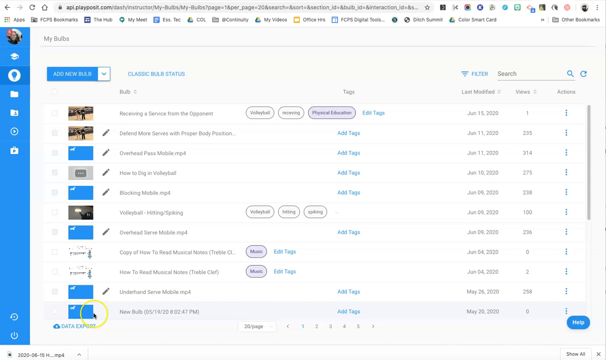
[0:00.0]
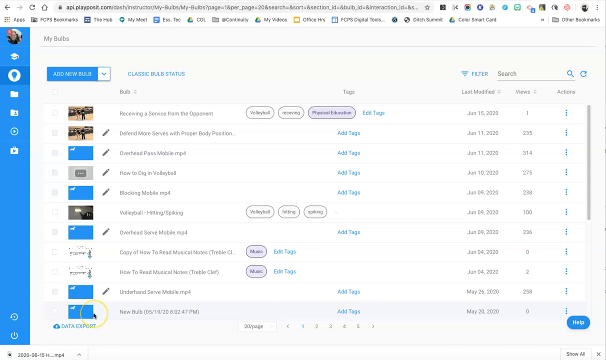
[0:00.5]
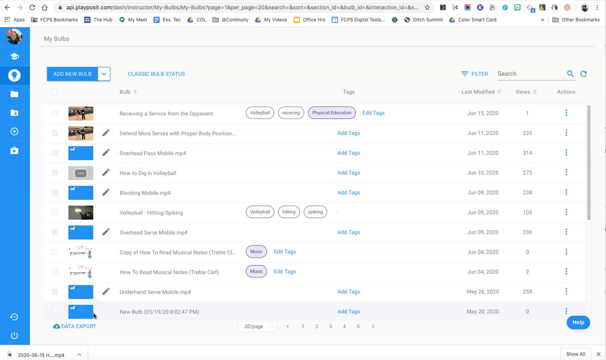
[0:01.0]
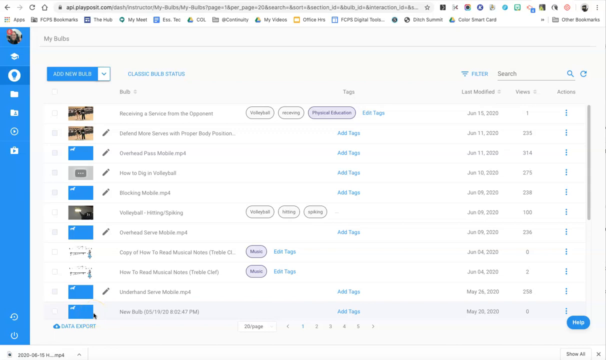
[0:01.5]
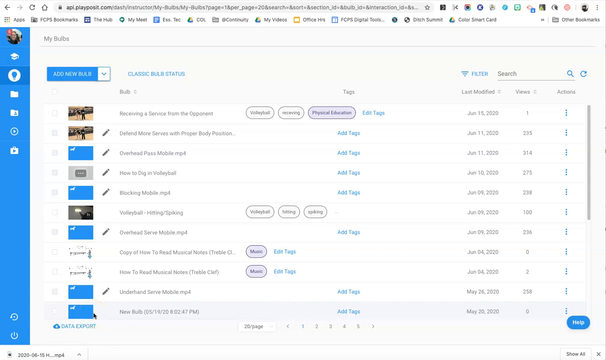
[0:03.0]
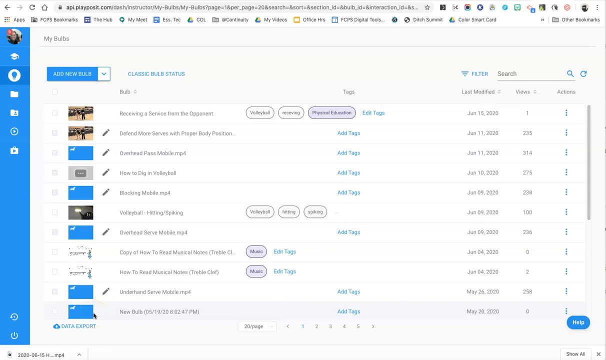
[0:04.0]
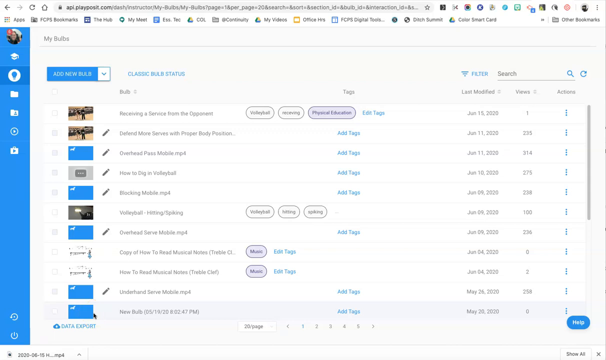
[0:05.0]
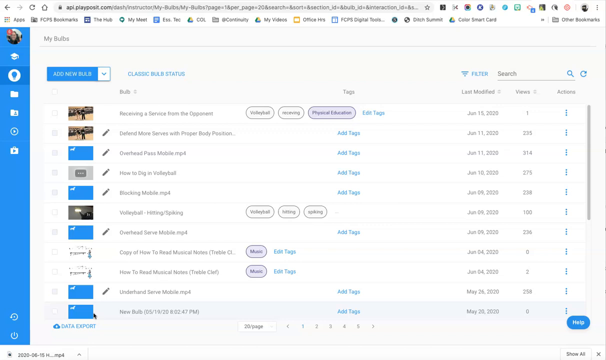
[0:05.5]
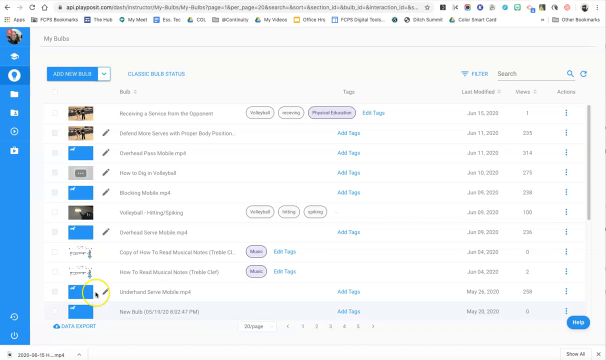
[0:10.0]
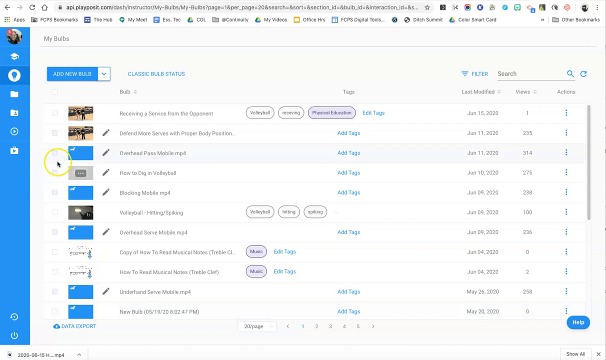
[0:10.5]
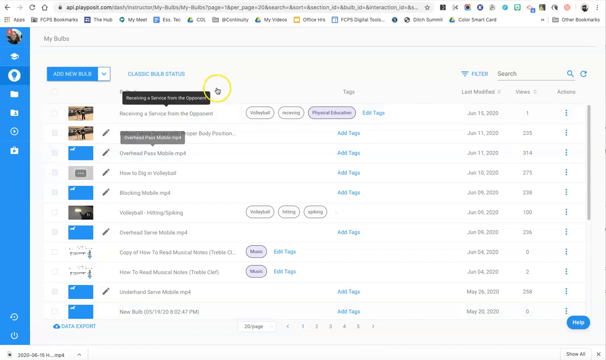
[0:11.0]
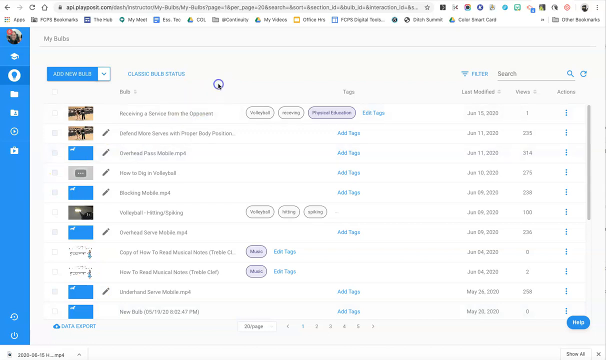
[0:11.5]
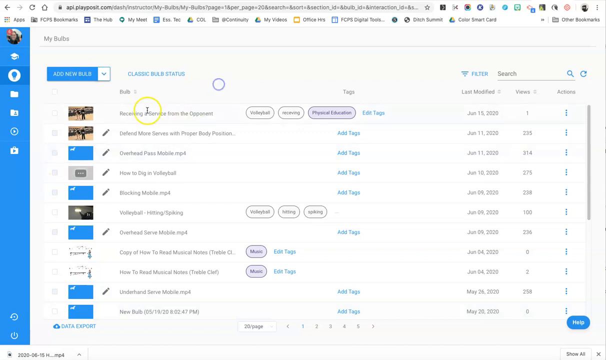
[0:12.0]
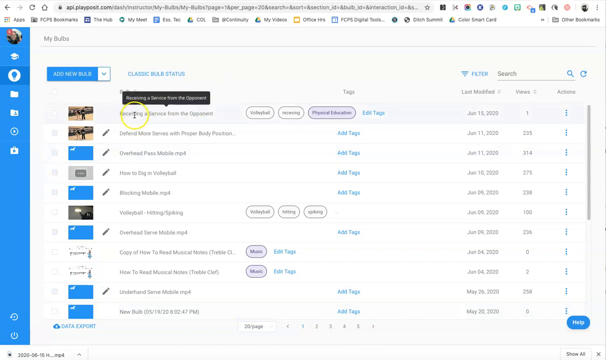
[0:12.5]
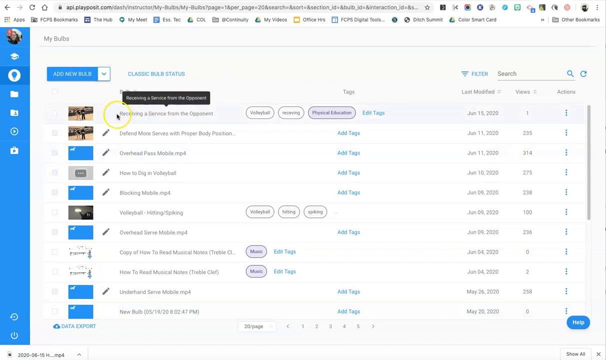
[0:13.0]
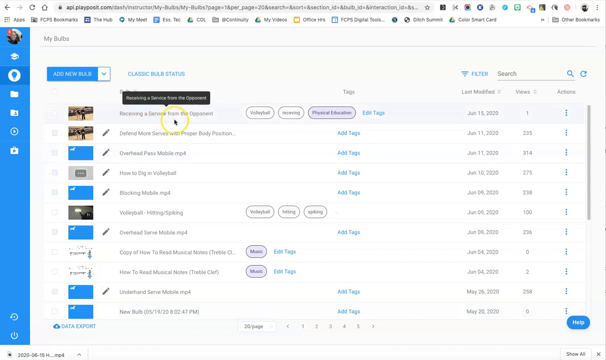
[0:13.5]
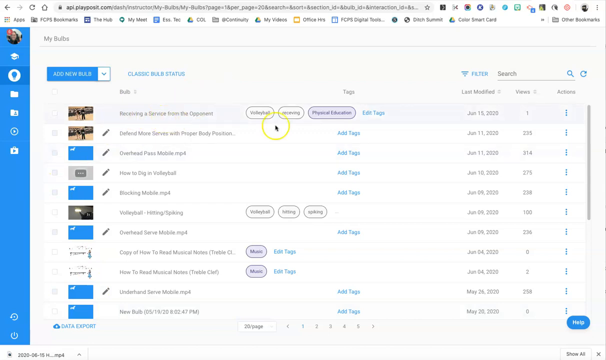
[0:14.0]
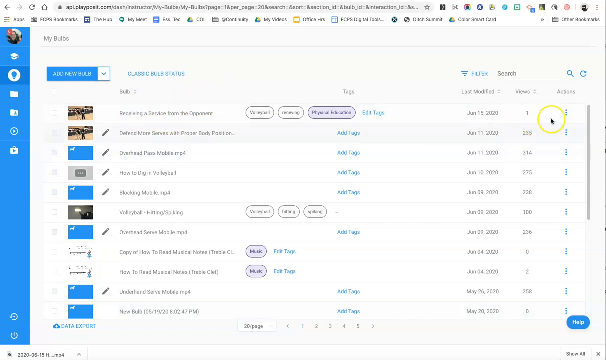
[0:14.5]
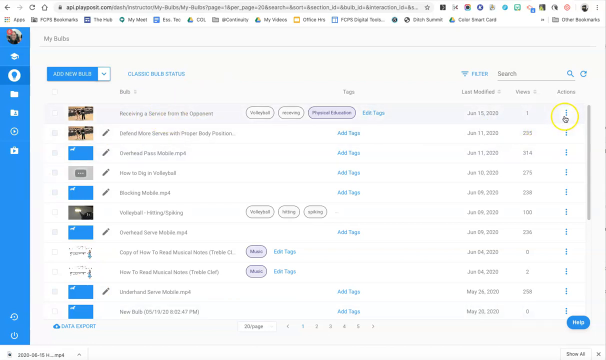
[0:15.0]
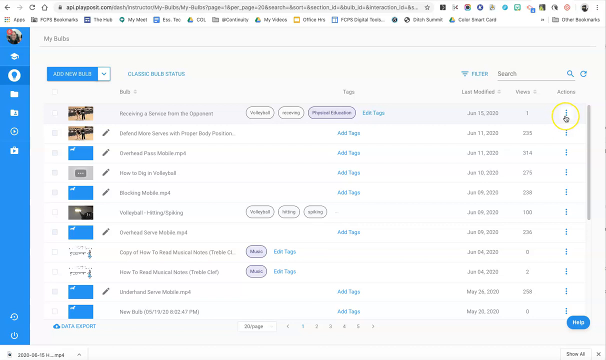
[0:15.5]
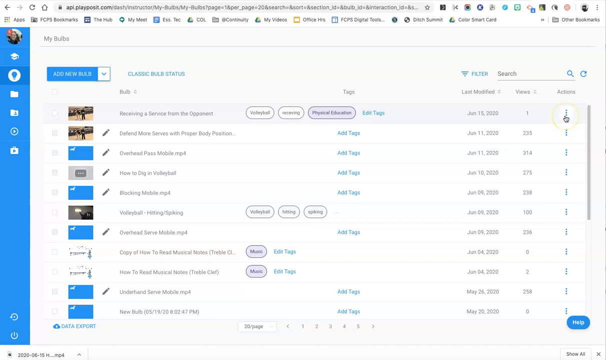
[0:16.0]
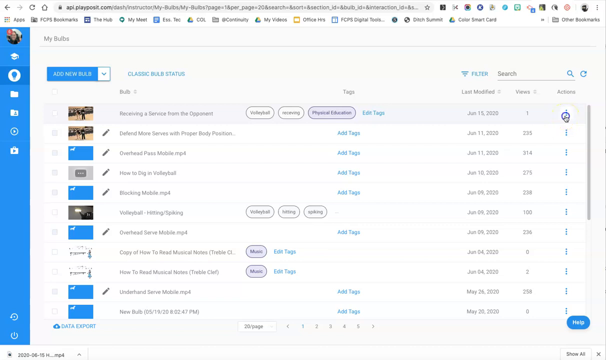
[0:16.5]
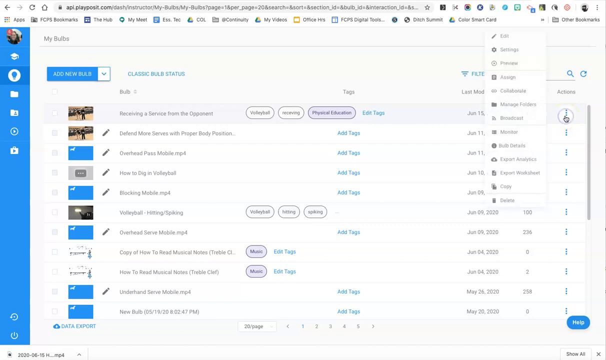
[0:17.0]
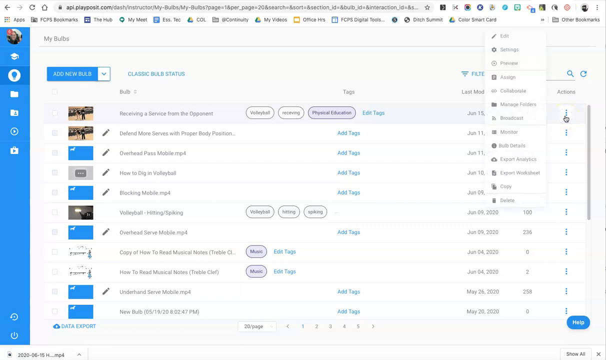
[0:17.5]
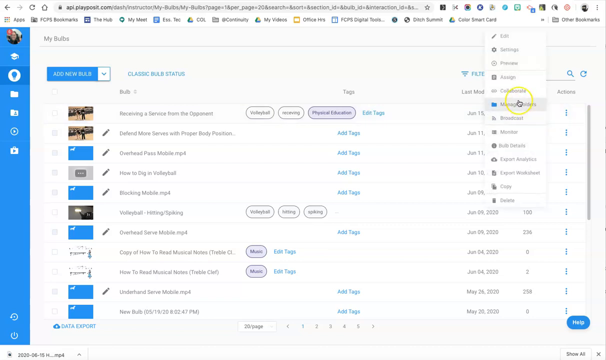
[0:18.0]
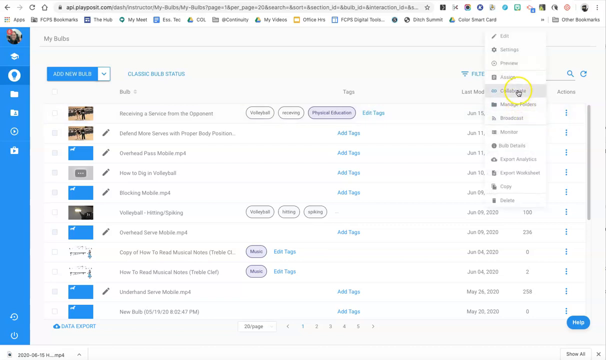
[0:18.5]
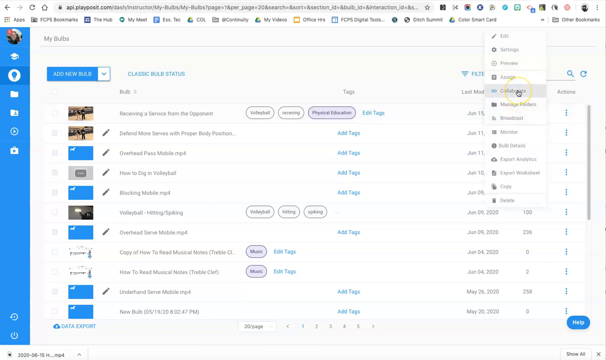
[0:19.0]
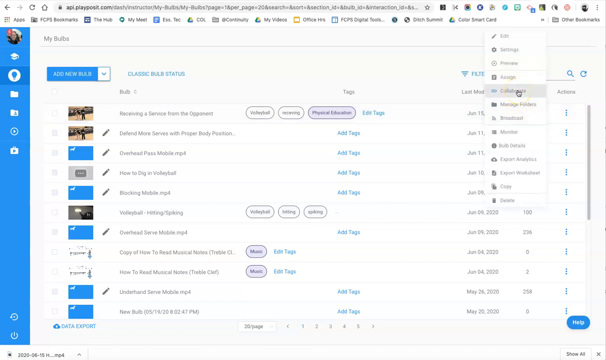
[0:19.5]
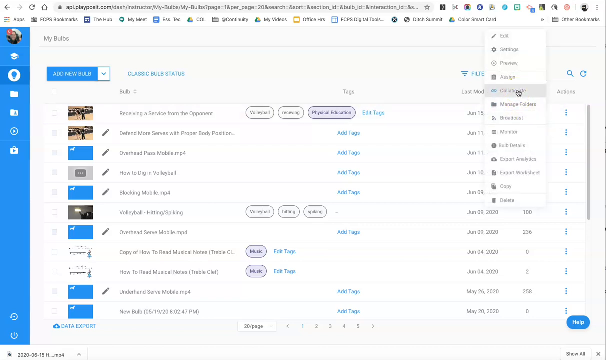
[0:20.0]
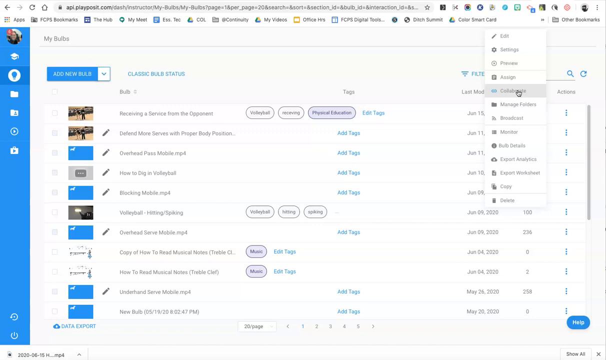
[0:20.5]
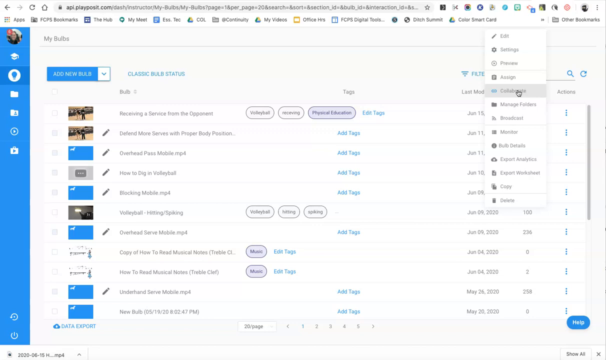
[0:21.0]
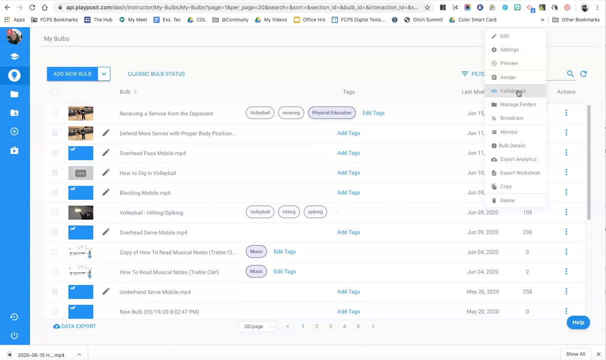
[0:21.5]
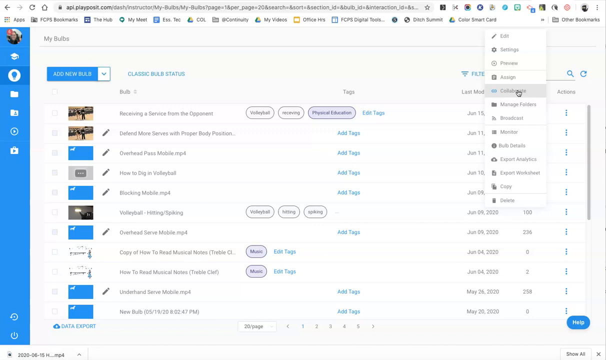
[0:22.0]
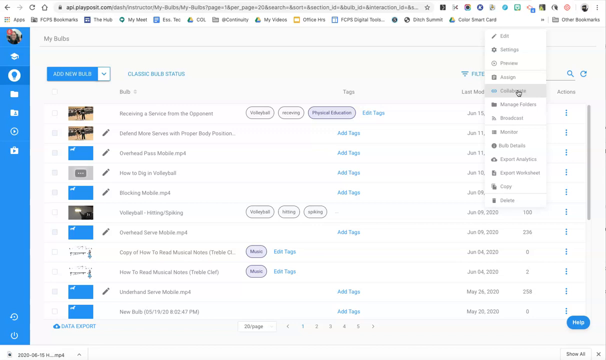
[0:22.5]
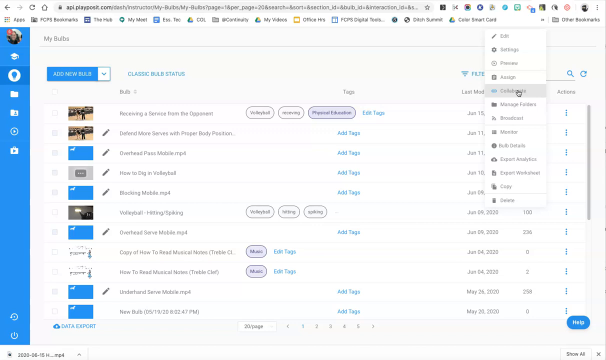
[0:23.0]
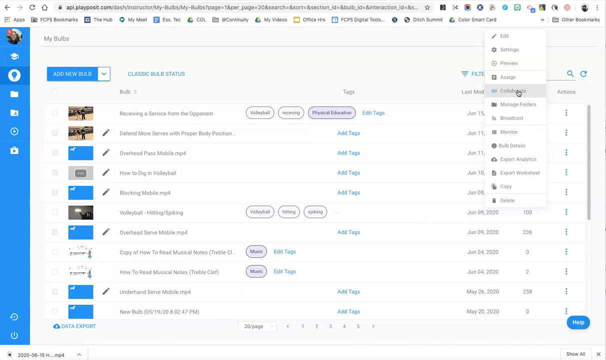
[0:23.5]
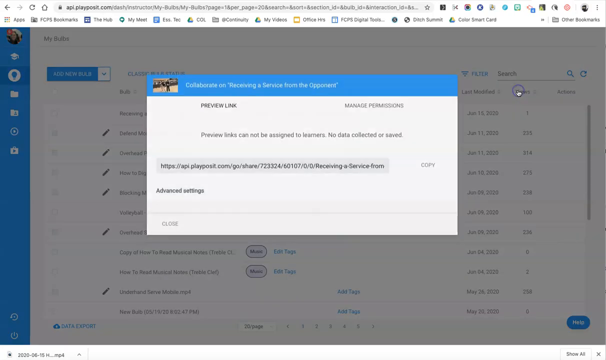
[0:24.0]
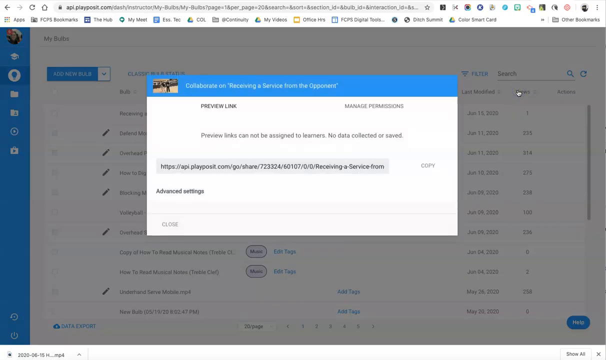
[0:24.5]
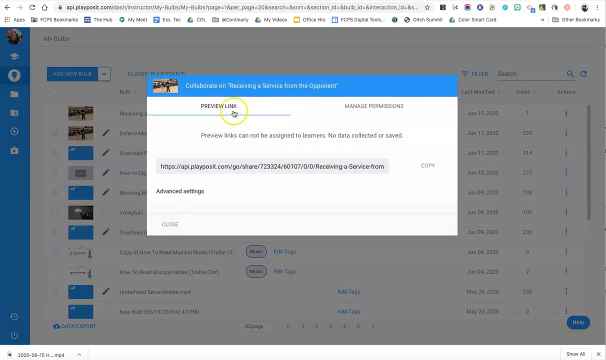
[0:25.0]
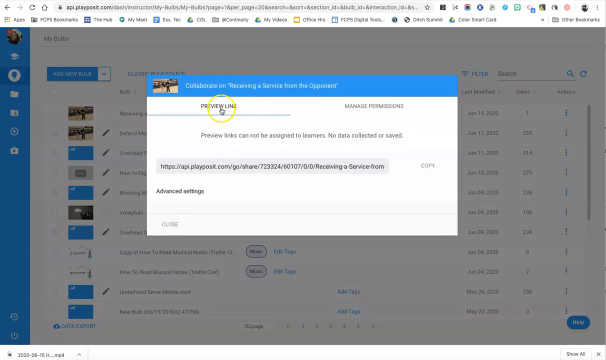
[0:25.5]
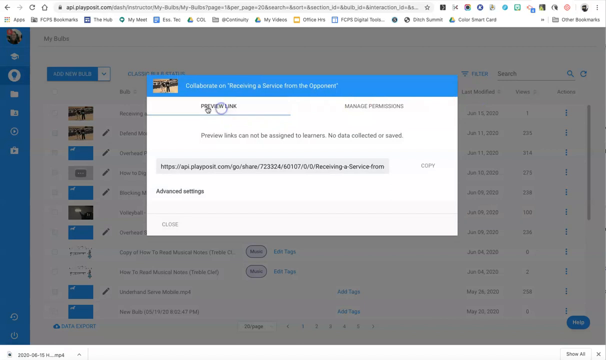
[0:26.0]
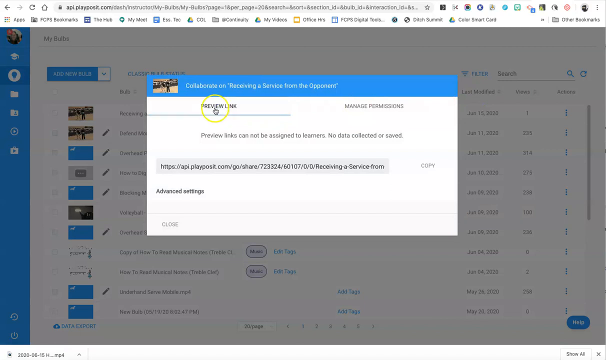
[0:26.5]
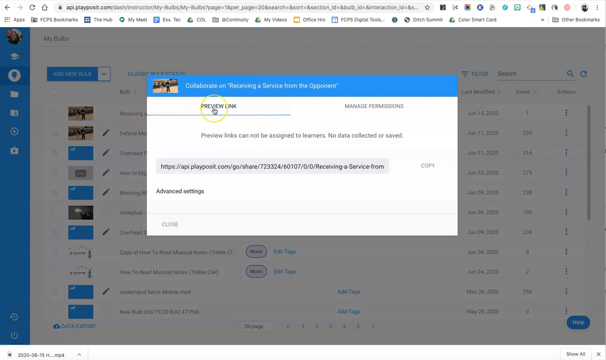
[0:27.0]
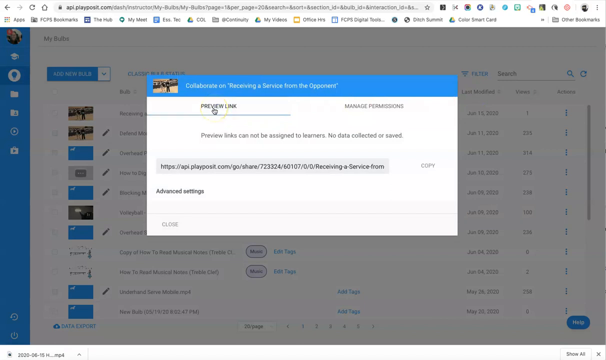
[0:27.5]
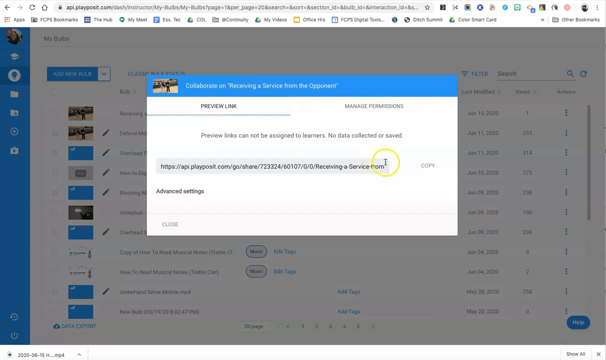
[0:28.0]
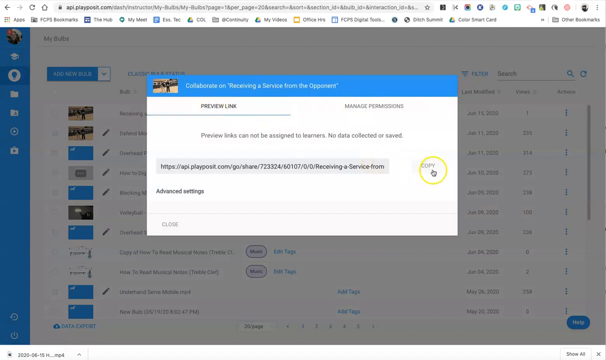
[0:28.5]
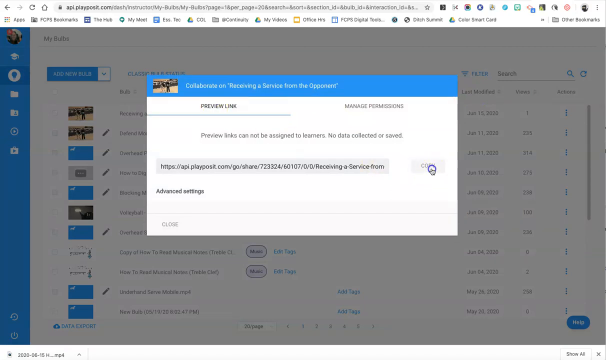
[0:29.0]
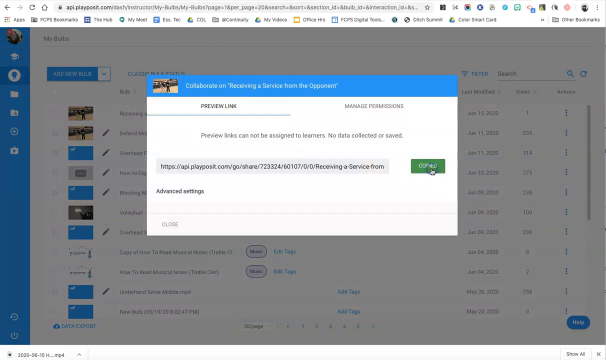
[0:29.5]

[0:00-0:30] The video opens on an open browser page of a website on a PC or a Mac. It looks like somebody's user page, since there is a round circle with a photograph in it in the upper left-hand corner of the page. A thin blue panel runs down the left side of the screen from top to bottom, holding six white icons against the blue. The page shows several different video previews. A round mouse cursor moves around the page, goes to the very first video listed, opens a dropdown box and clicks Preview Link.